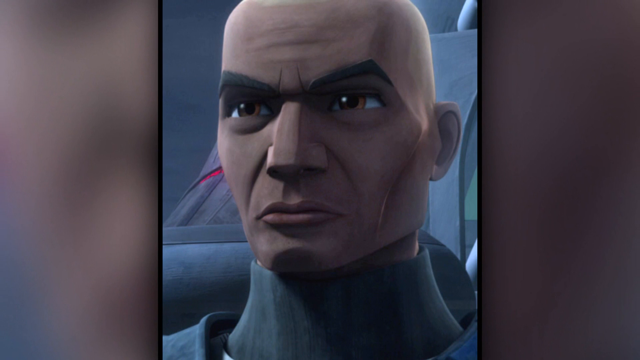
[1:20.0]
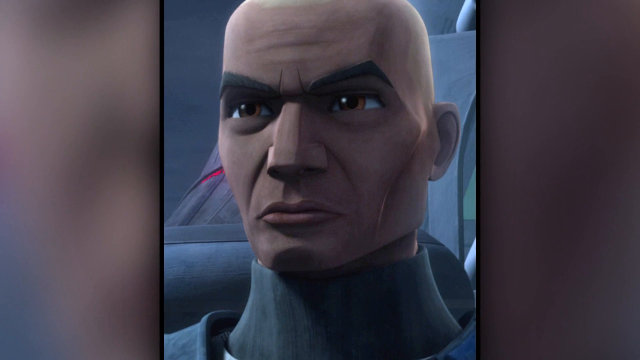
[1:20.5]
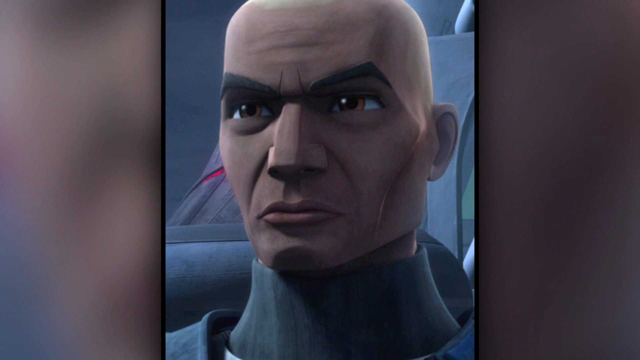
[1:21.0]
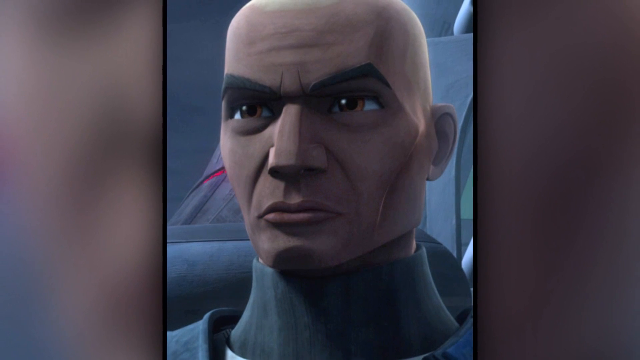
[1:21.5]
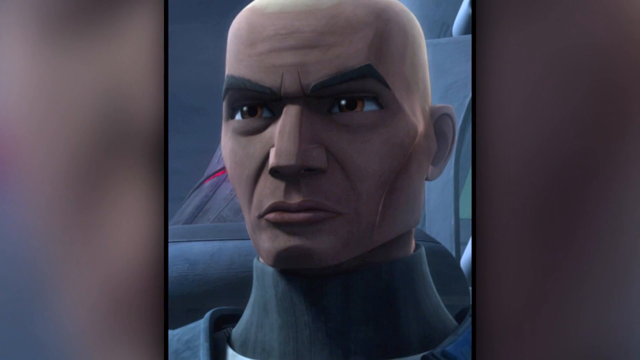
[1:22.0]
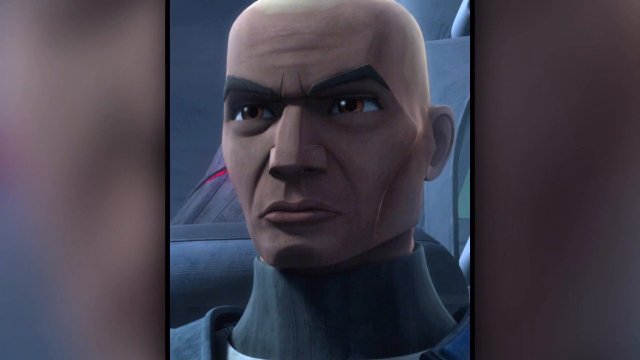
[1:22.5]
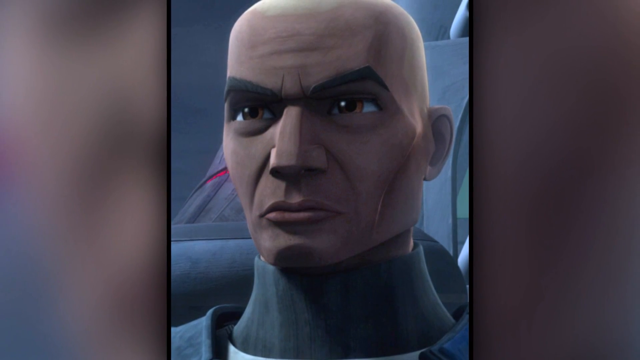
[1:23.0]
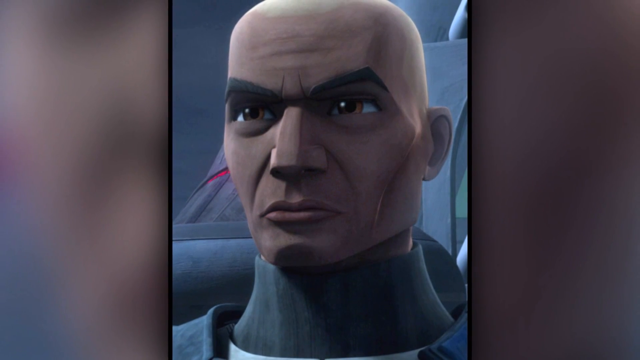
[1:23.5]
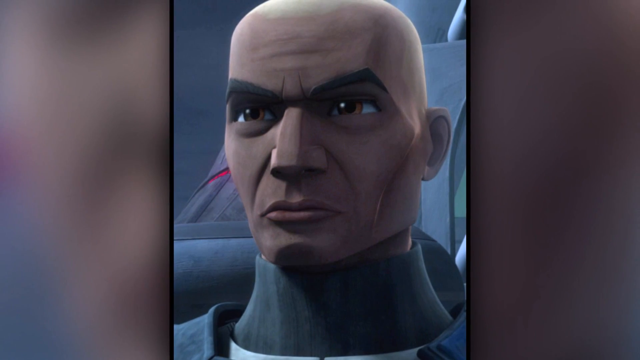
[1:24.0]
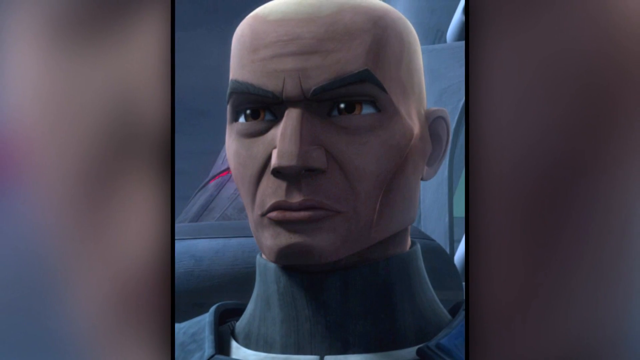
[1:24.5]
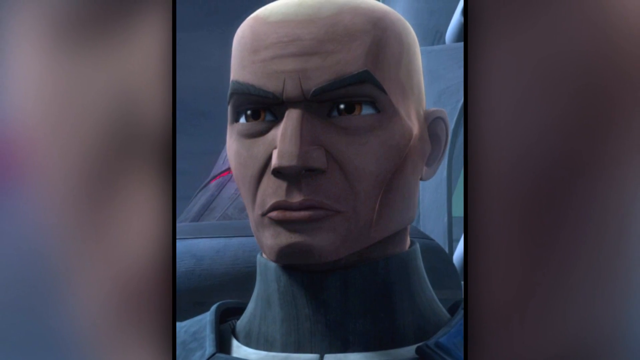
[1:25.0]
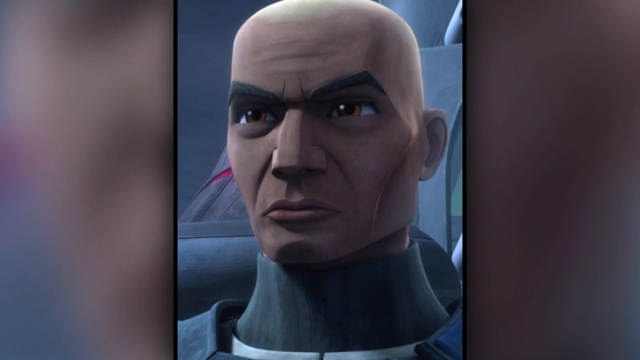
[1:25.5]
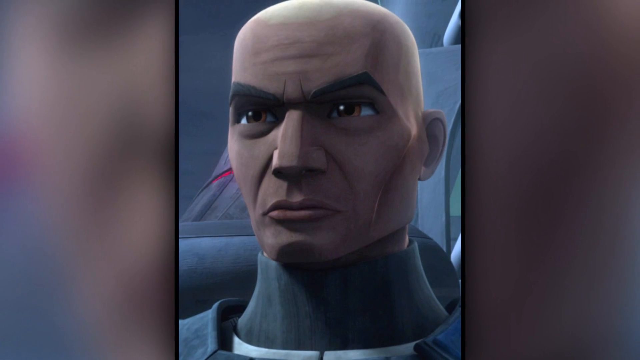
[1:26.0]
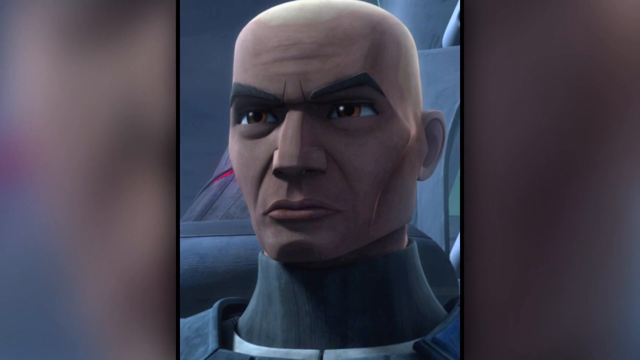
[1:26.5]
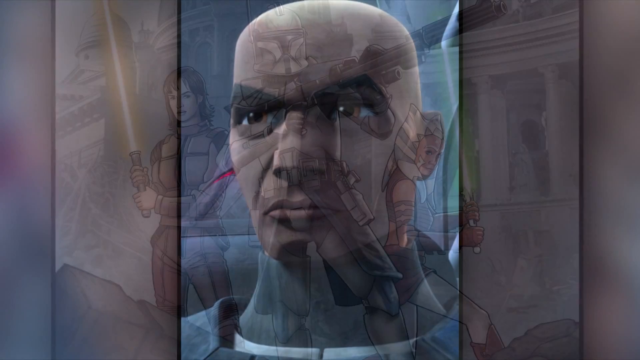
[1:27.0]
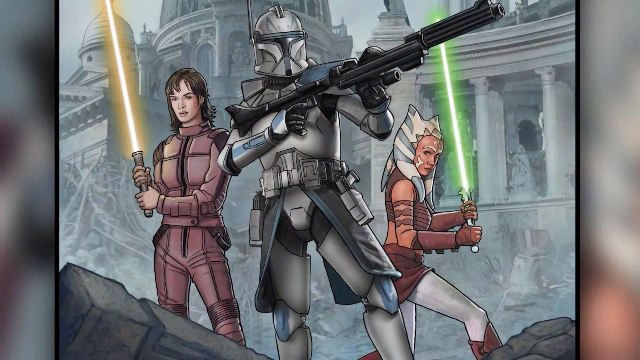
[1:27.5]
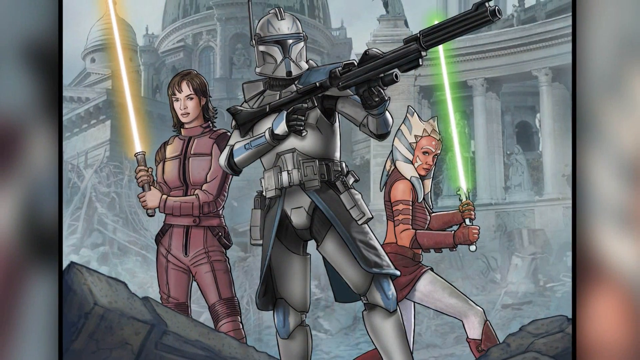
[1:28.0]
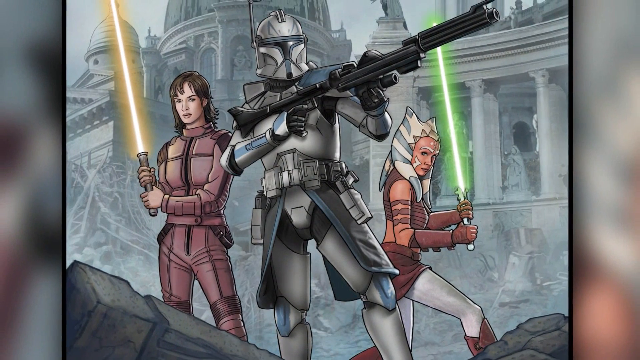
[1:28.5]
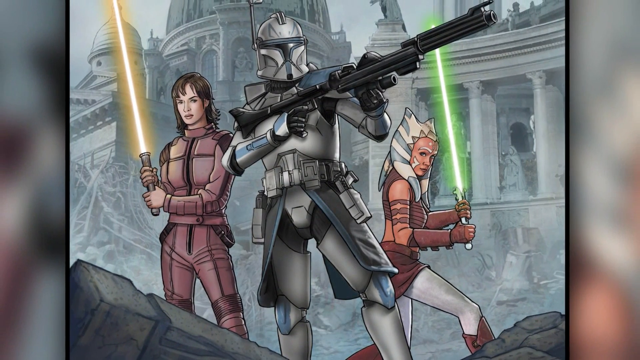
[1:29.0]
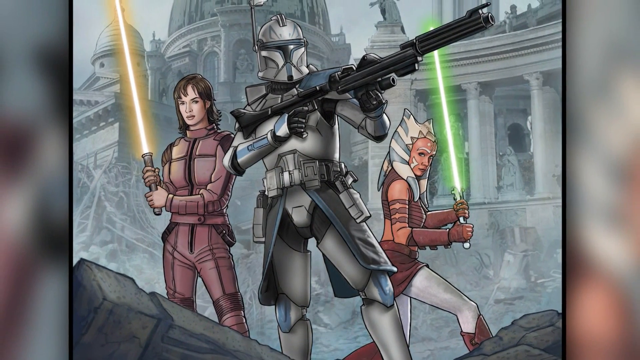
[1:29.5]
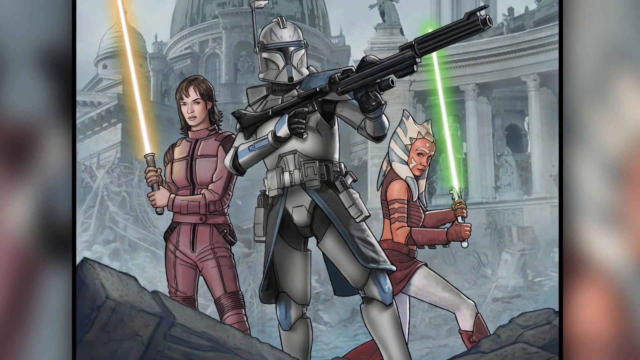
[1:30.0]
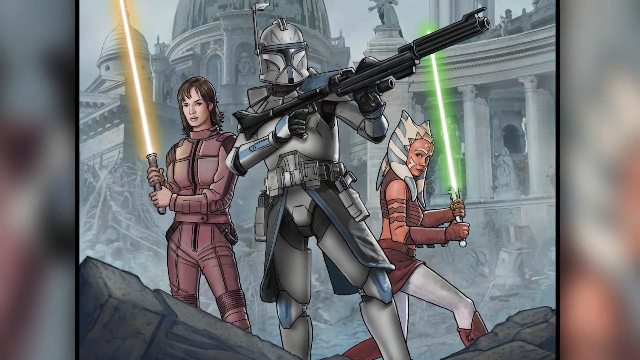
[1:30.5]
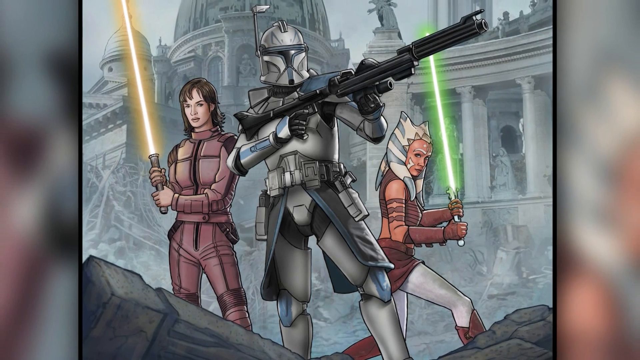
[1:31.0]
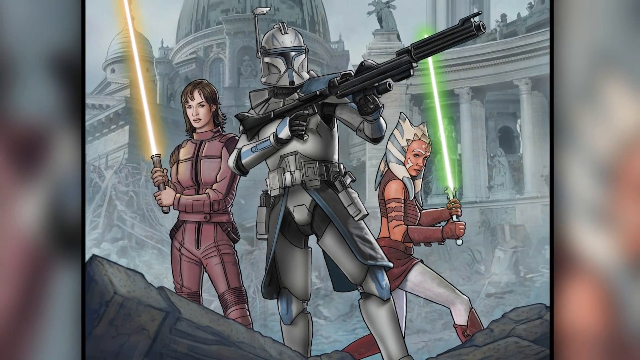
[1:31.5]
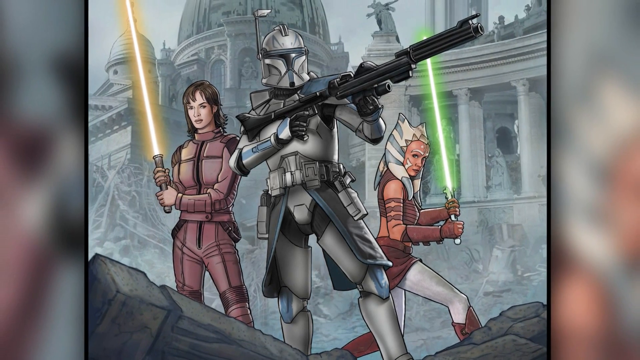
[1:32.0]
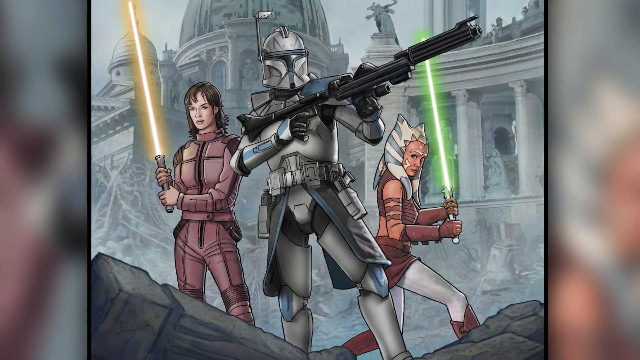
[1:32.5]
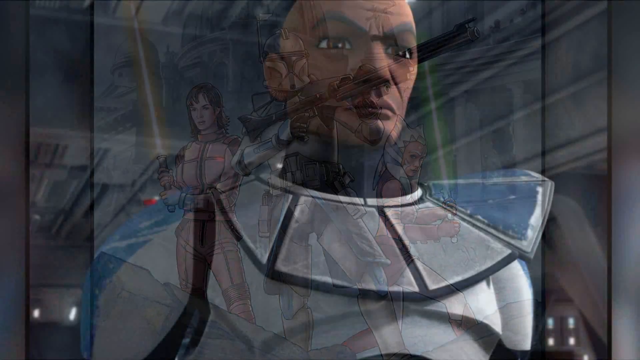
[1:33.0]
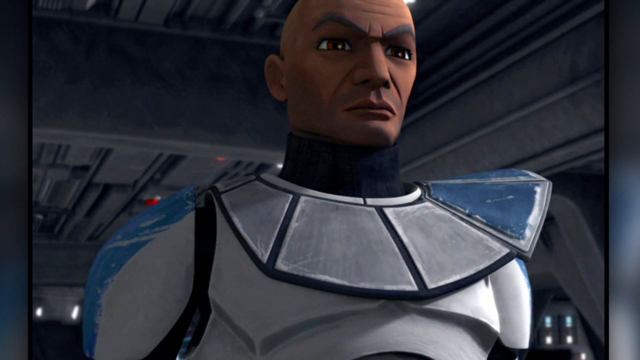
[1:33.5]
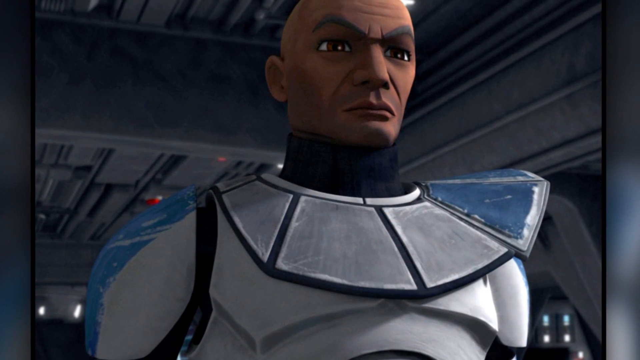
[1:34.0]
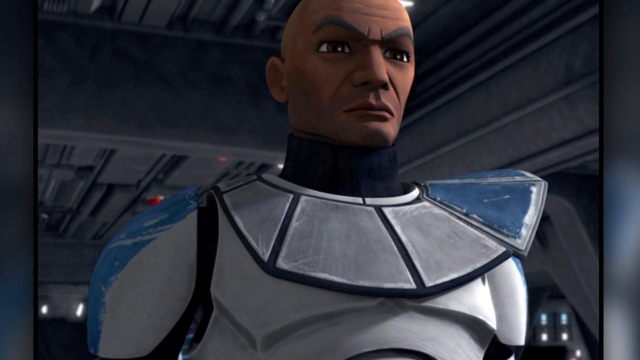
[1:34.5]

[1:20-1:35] The African American man is shown from afar, with the three people in the background; he seems to be staring at them with a kind of angry face. He is then shown pulled back, looking a little more troubled or worried. He wears some kind of metal suit with no face covering. In total there are four figures in the scene: two women, one with a piece on top of her head and one without anything, a man who appears to be in a full metal outfit, and the African American man. The Lore Master logo is in the bottom right.